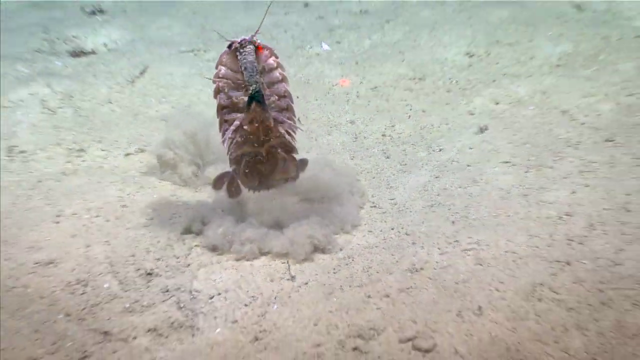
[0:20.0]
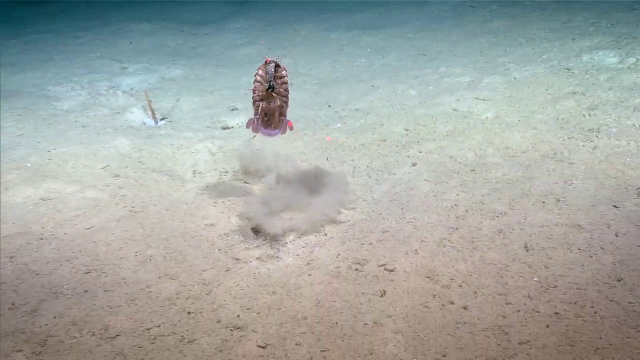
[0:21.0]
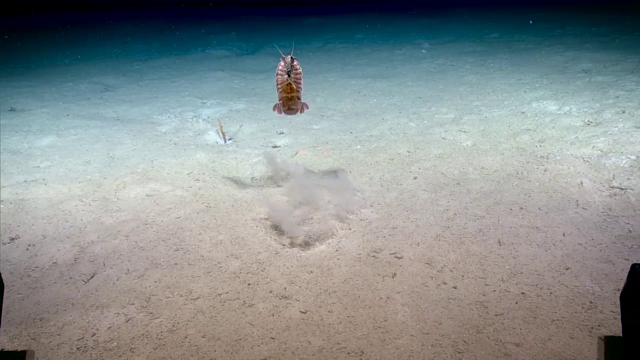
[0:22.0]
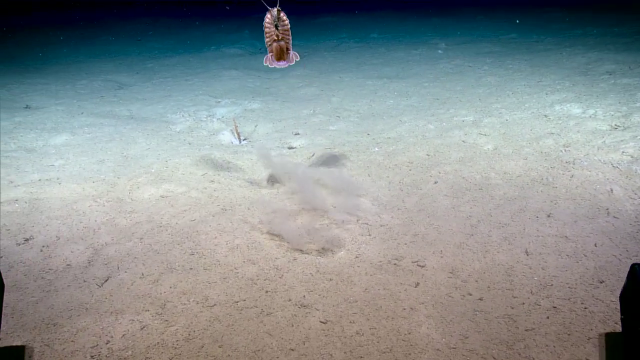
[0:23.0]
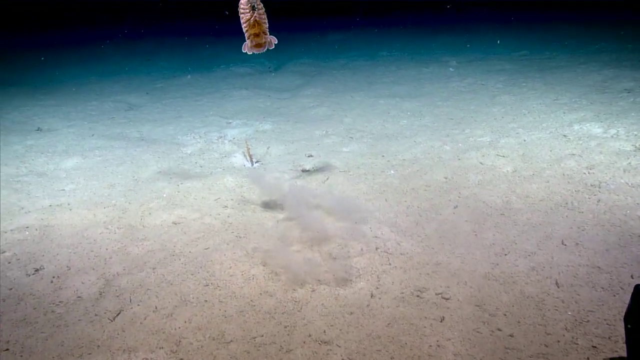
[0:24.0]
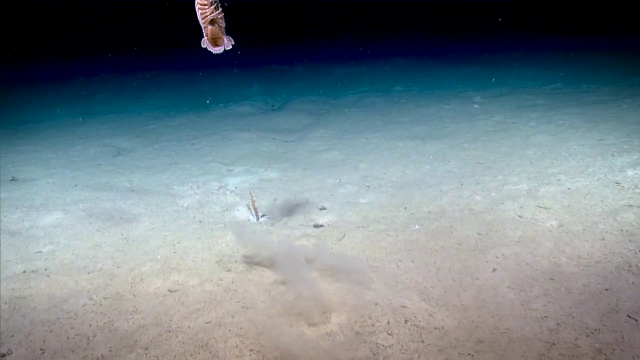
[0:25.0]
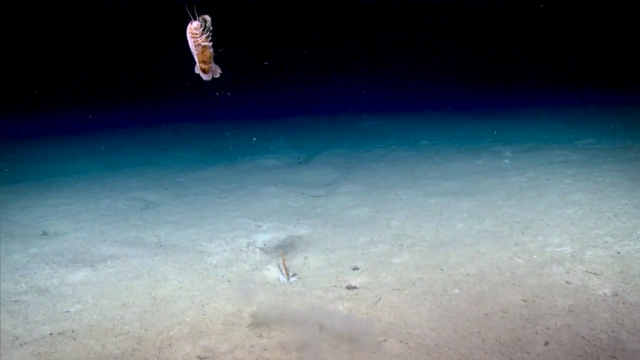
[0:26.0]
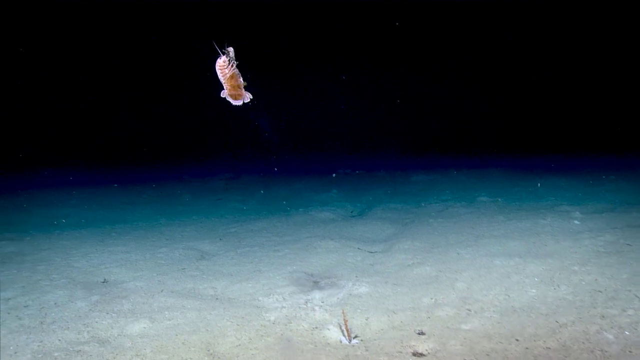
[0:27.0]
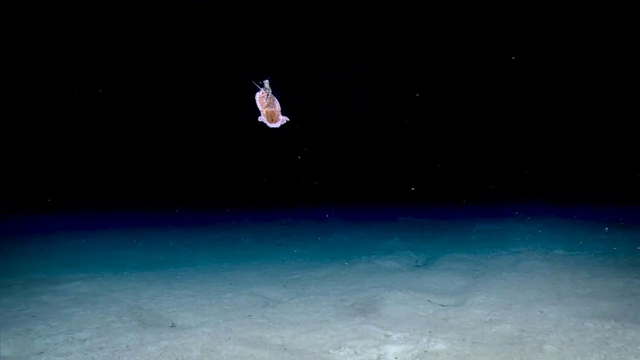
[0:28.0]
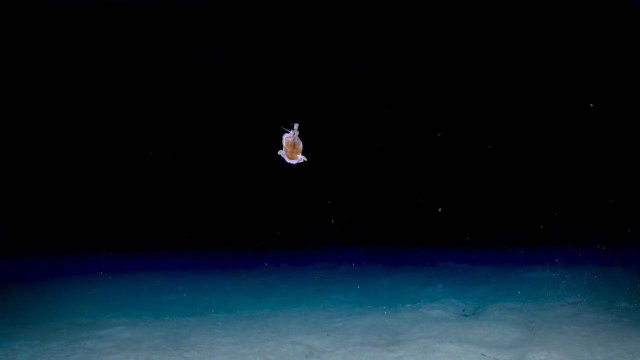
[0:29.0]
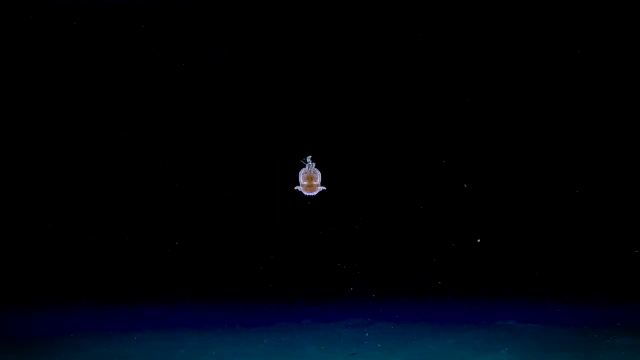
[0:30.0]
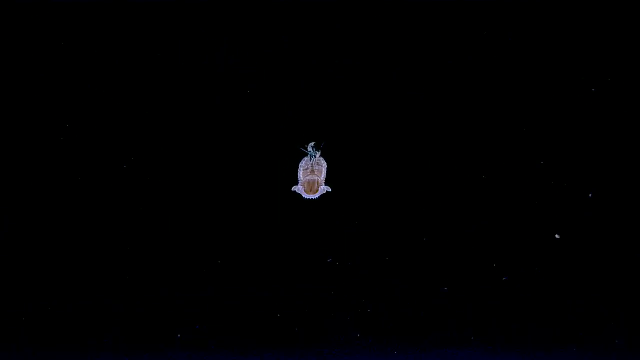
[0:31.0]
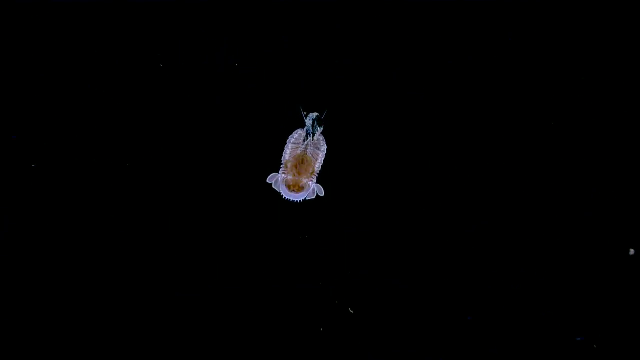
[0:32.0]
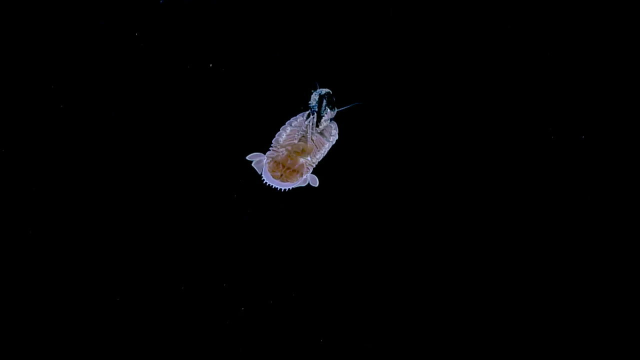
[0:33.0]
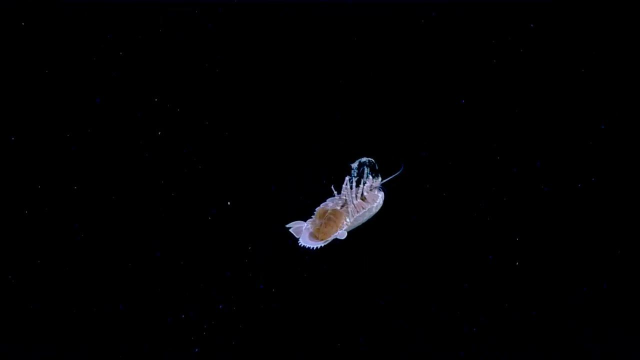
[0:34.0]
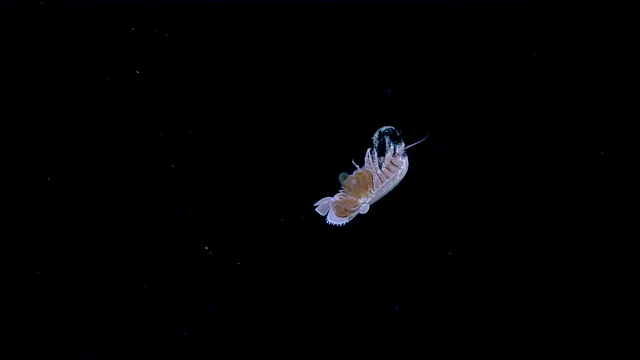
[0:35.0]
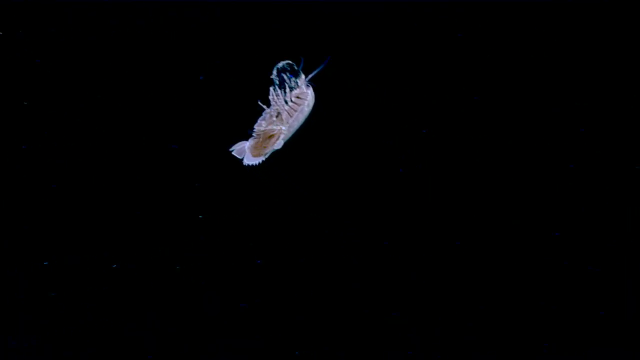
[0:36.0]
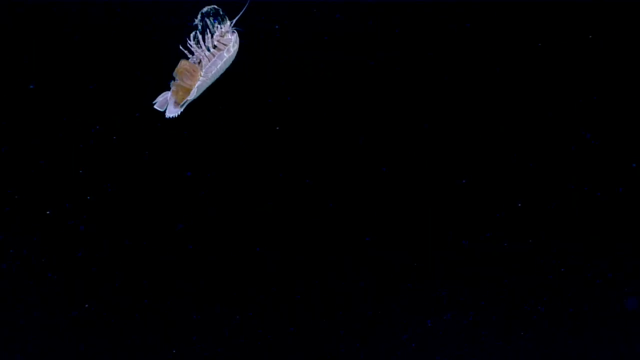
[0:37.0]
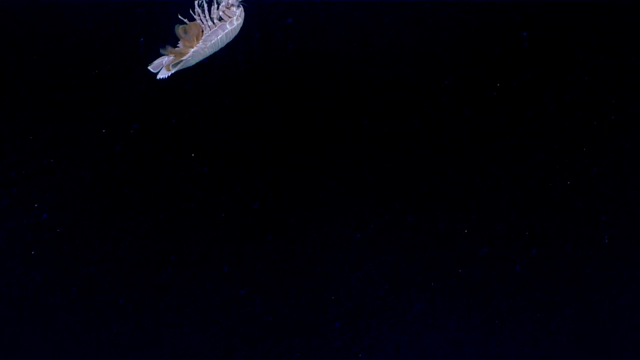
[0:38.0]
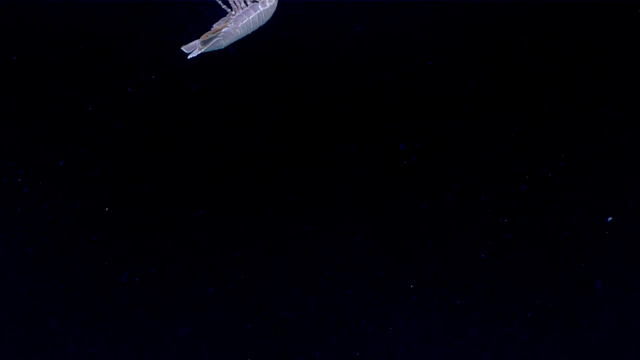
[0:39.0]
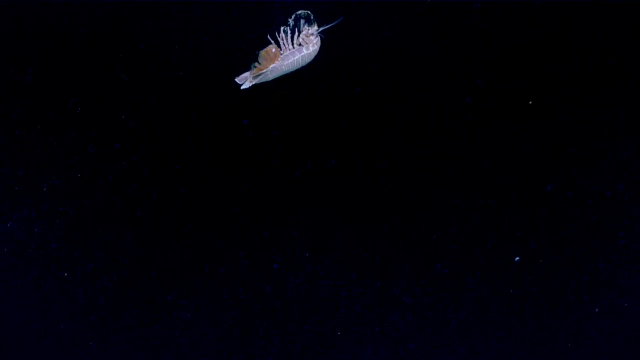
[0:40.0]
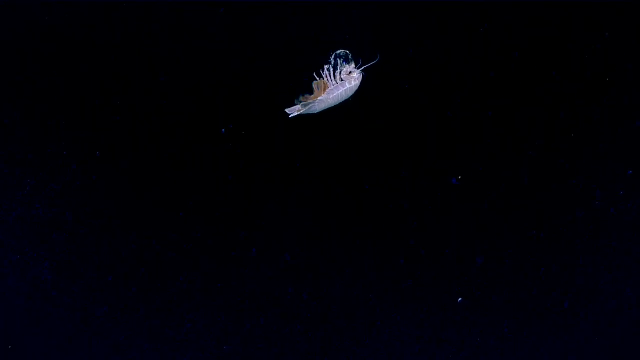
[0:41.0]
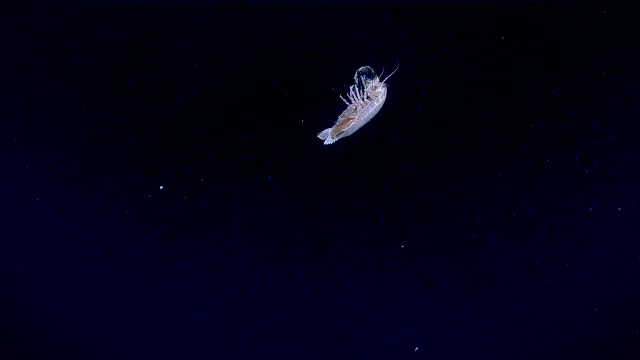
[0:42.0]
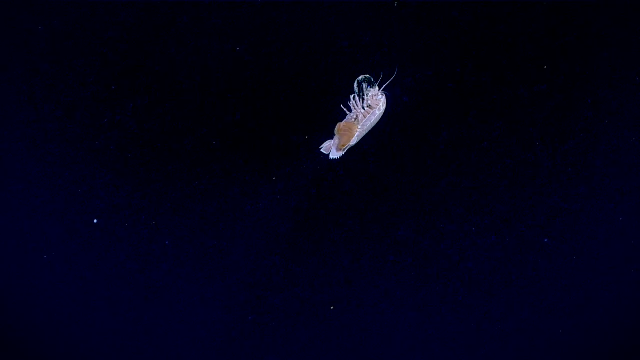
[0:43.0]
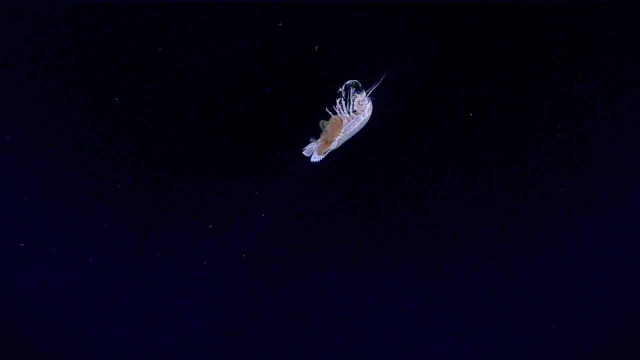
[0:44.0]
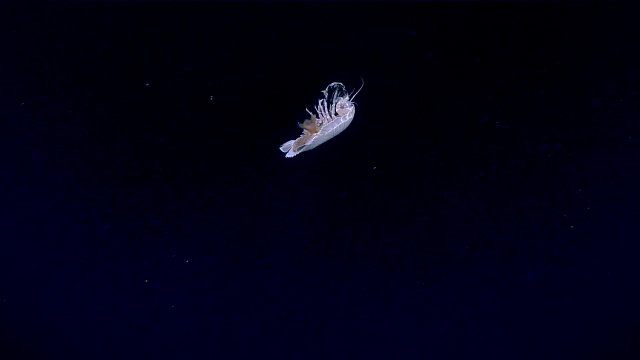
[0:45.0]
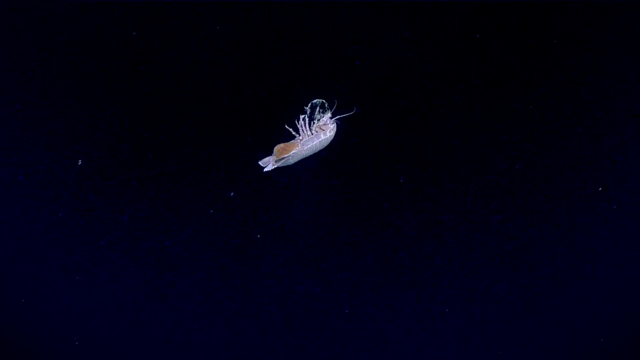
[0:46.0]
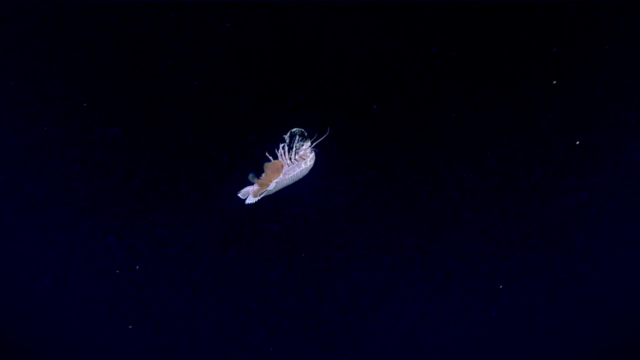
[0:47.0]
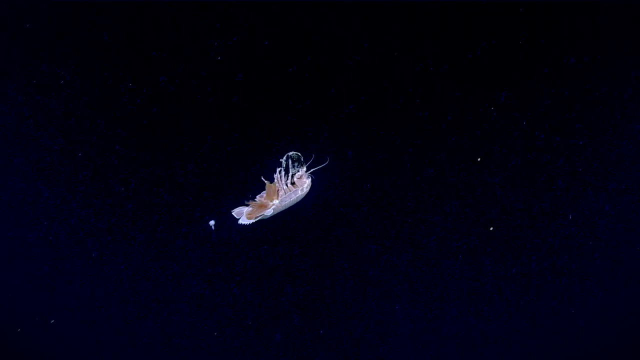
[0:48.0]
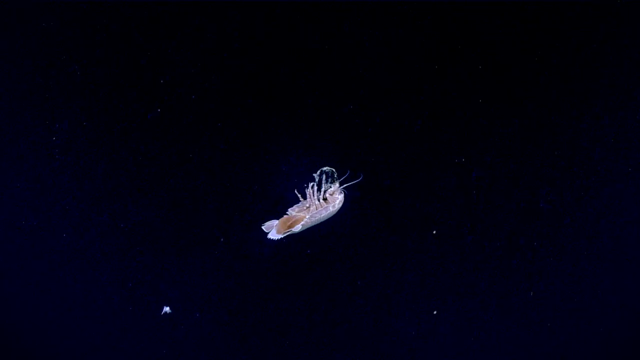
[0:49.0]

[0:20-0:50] The organism, apparently an isopod, also known as the sea cockroach, continues to be visible. It has a winged body, two antennas coming out of its head, and several legs similar to a cockroach's. Its body is gray, and it swims and floats upwards. Its upper legs move in a very strange, very fast way. It moves through the water with little fins at the bottom, like a tiny flipbook with brown pages on its tail that it keeps flipping, propelling its small body quickly. Finally, the camera films it moving away toward the bottom, floating.